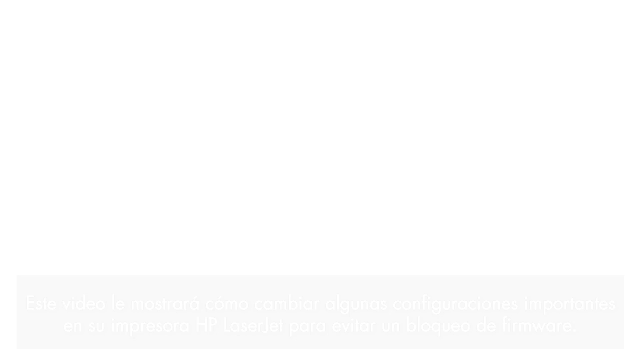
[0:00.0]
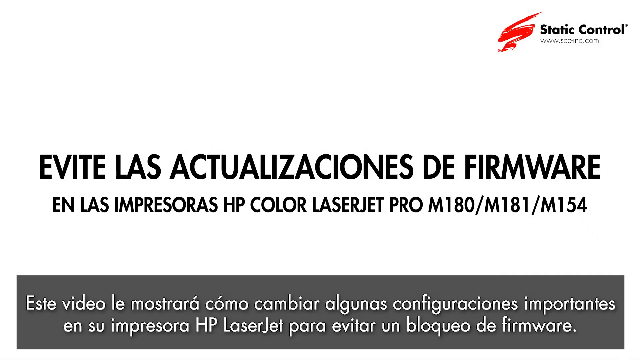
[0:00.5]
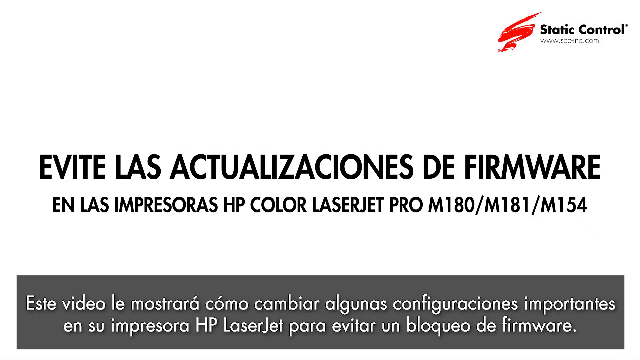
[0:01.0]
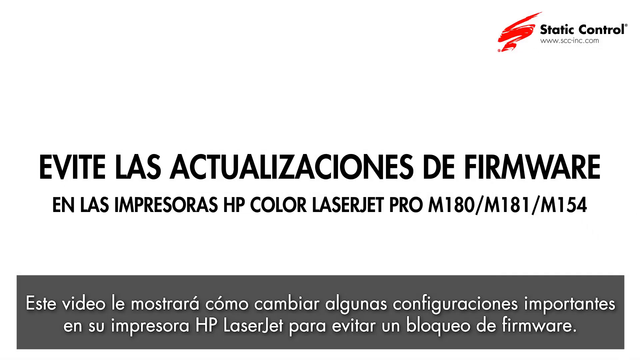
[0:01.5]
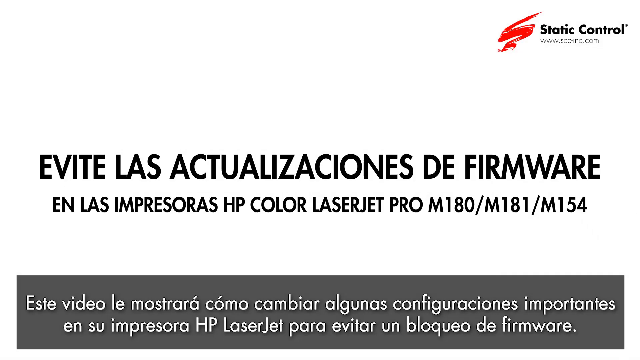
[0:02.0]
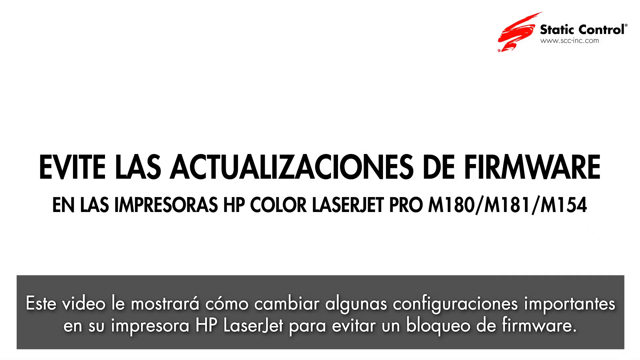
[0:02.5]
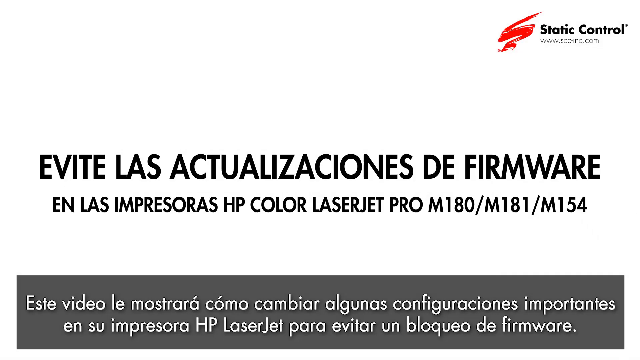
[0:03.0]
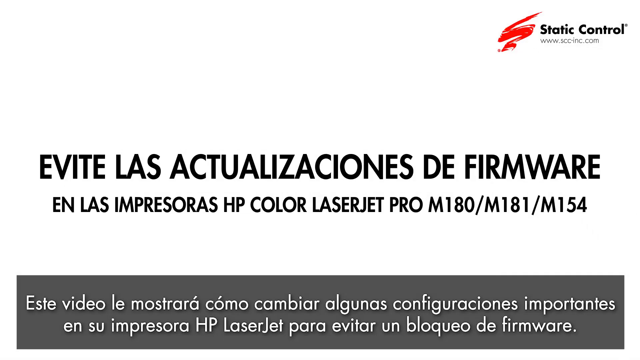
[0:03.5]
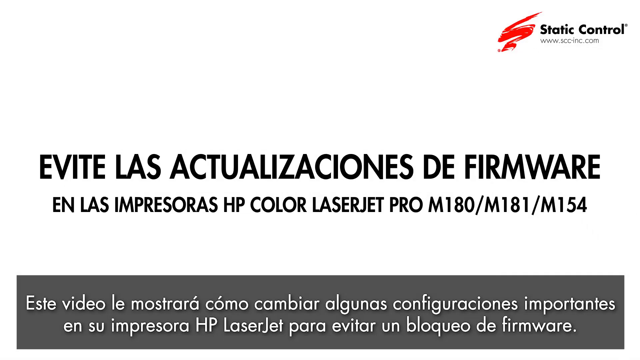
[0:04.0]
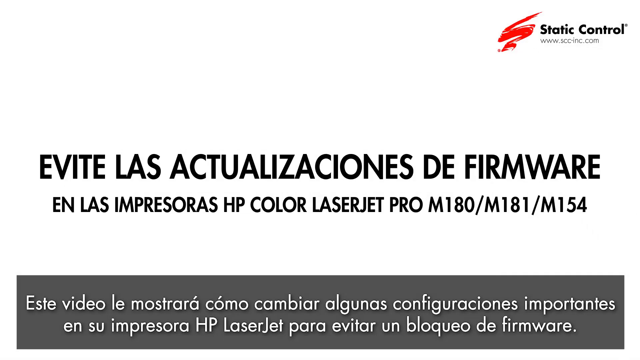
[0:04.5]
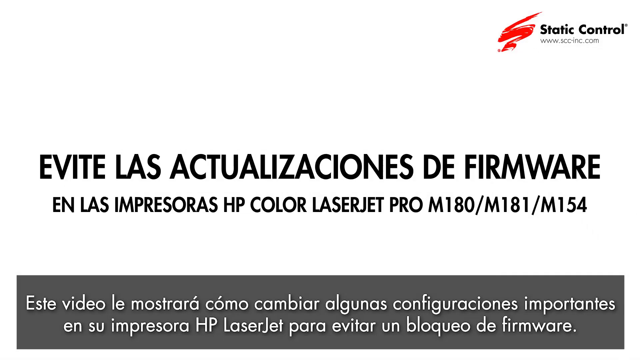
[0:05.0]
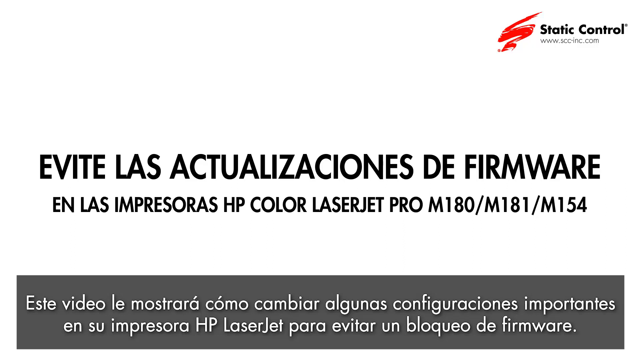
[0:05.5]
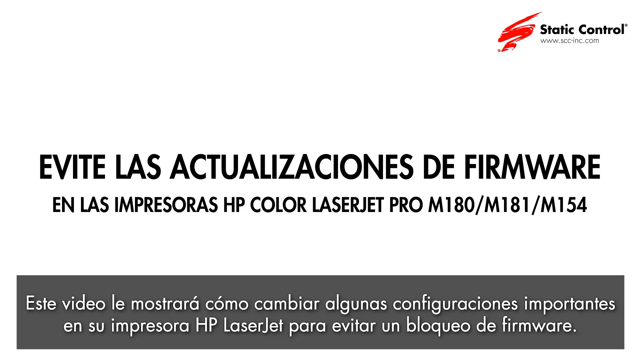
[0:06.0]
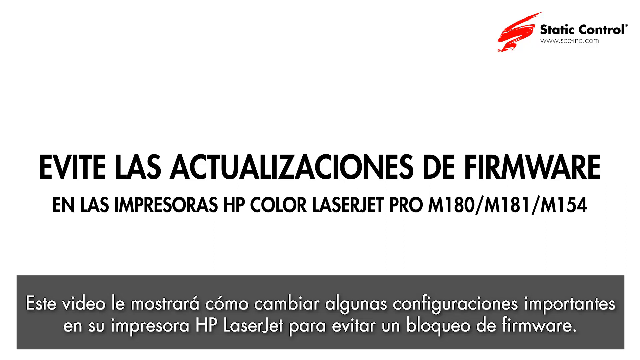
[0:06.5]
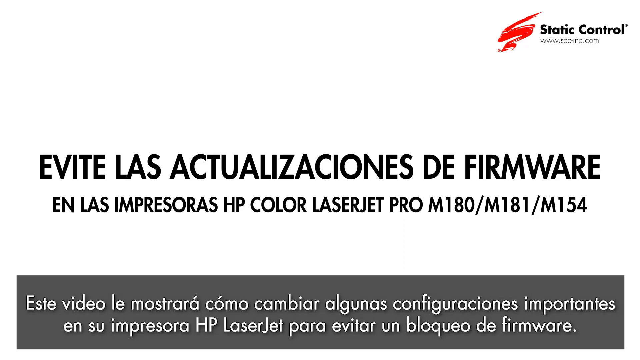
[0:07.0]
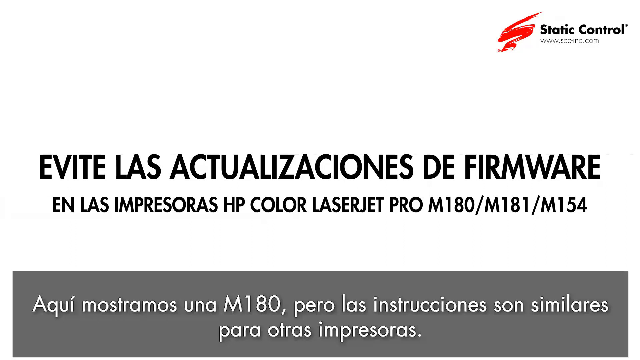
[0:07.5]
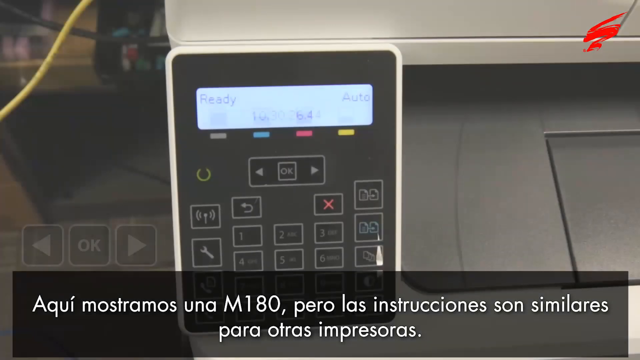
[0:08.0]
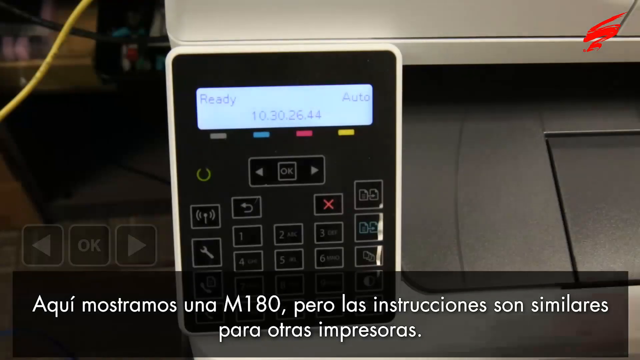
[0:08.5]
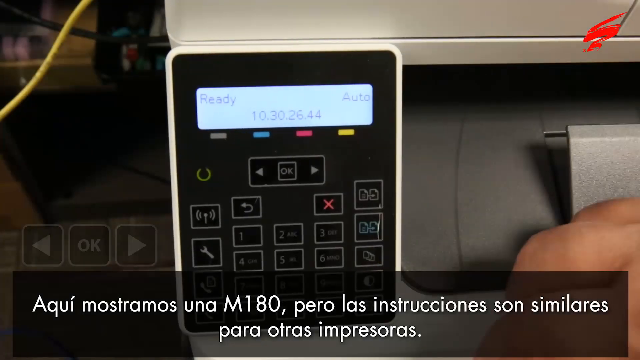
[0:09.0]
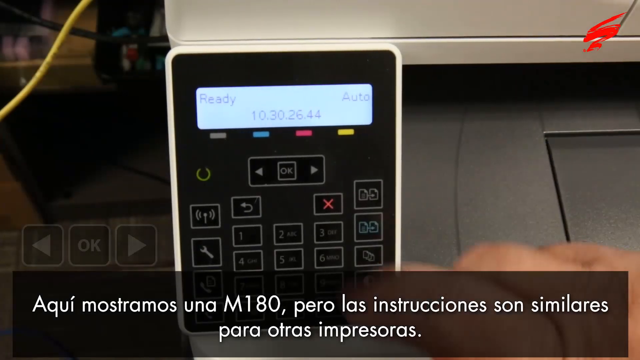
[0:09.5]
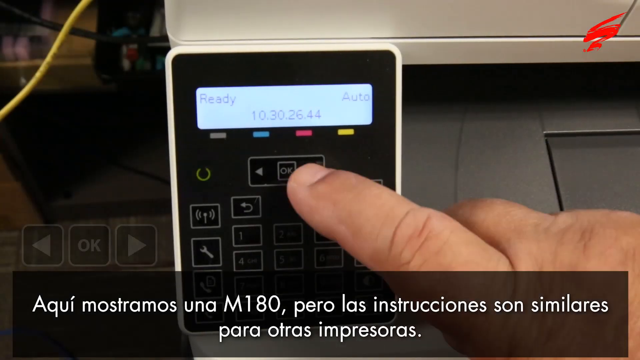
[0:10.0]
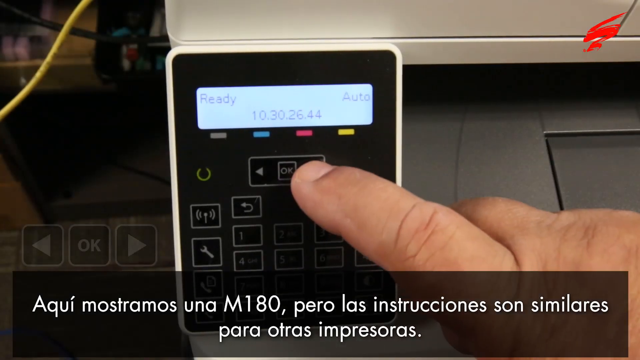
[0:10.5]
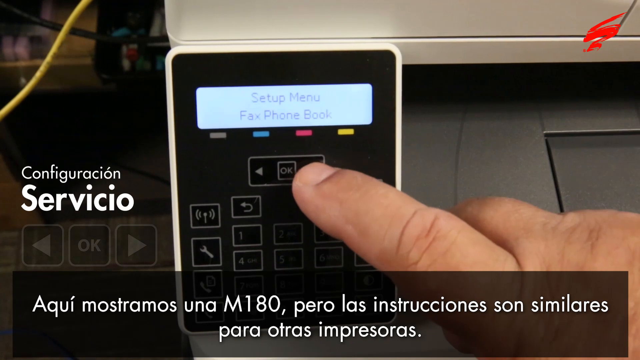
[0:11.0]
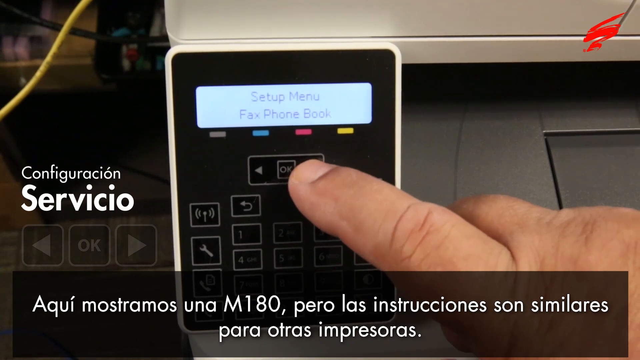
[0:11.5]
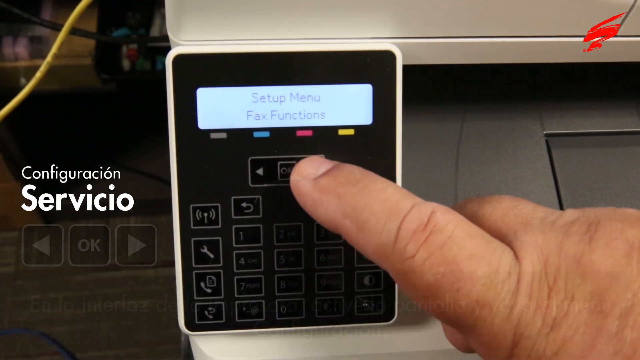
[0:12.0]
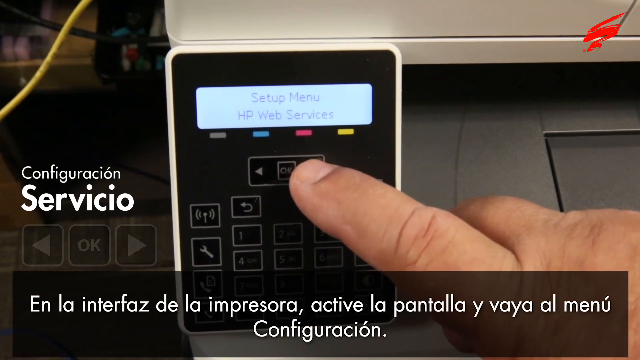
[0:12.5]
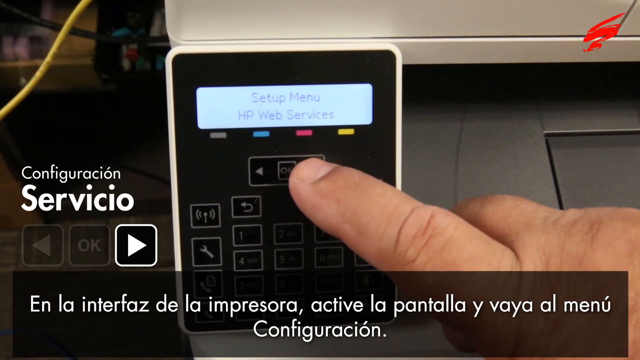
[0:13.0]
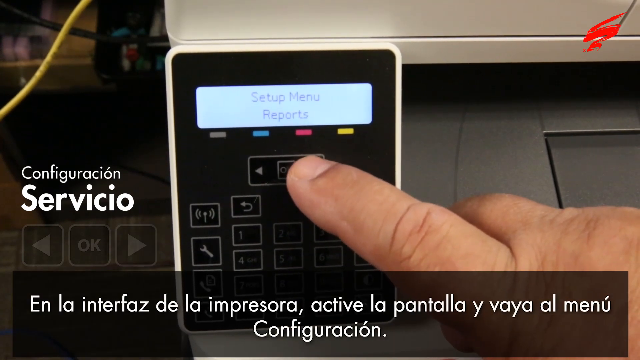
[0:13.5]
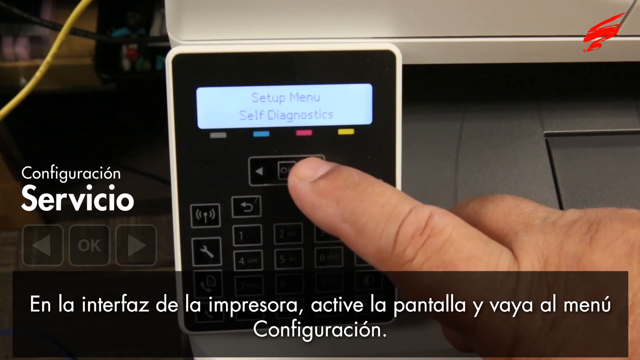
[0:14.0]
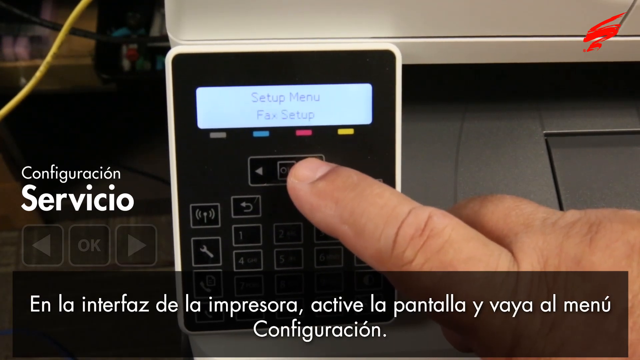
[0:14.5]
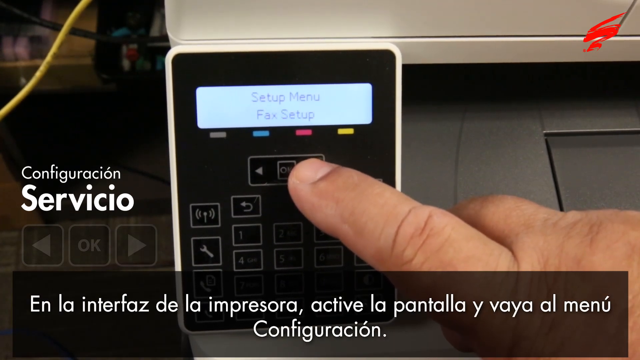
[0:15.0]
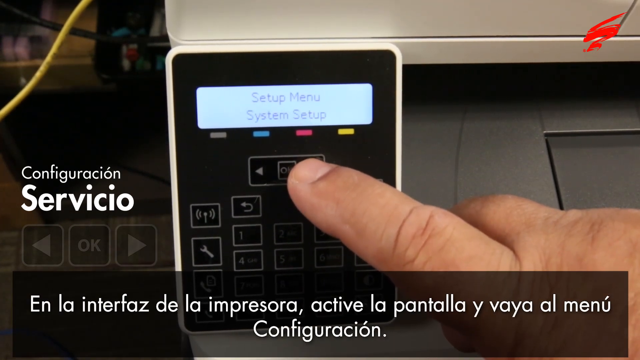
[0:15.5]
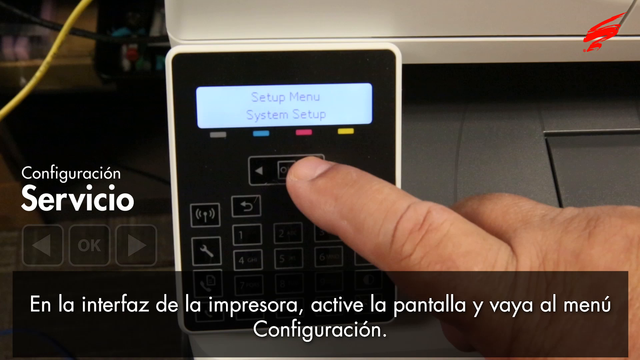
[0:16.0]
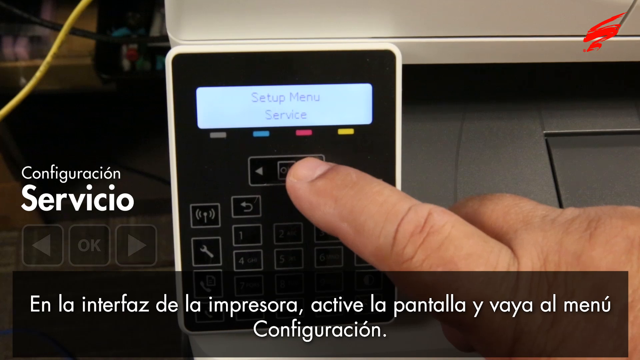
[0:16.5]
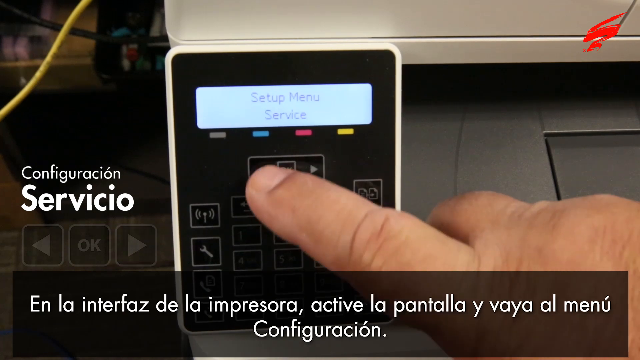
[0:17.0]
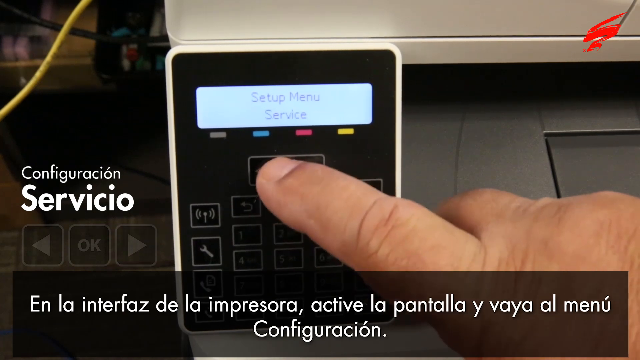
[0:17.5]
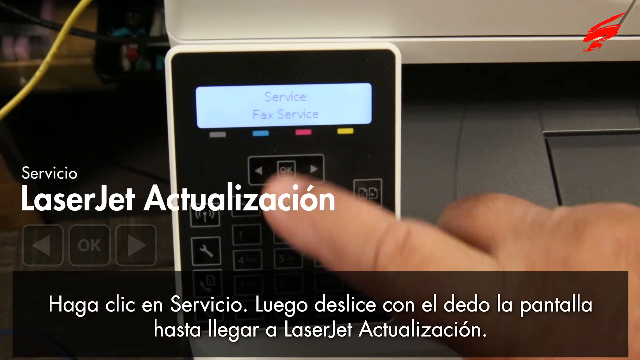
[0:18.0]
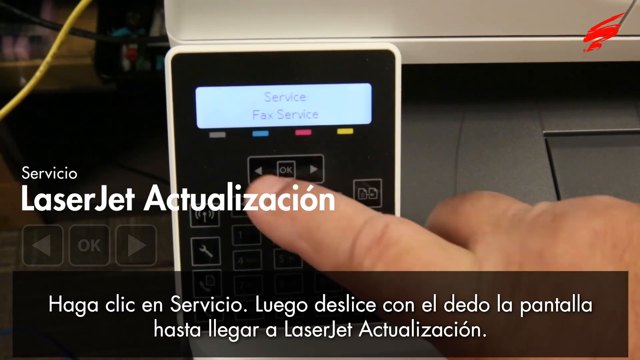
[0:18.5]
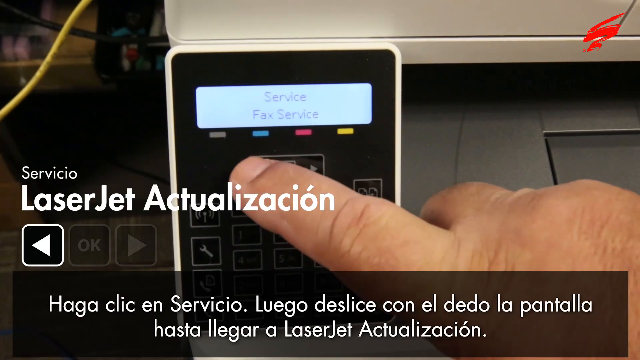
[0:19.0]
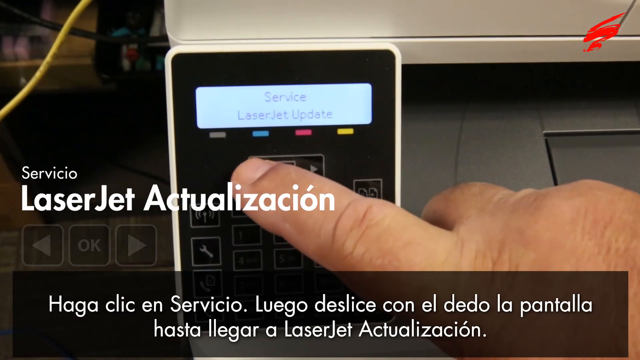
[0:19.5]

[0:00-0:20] An intro sequence opens the video. A logo at the top right reads "Static Control" along with "www.sccinc.com". In the middle the text reads "Evite Las Actualizaciones de Firmware", and right below that it reads "En Las Impresoras HP Color LaserJet Pro M180-M181-M154". At the bottom it reads "Este Video Le Mostara", followed by more Spanish text. Footage follows of someone typing on a device that is not a calculator but apparently some sort of service machine that can be programmed. The person seems to be taking the viewer through the process of programming it, going through its settings, so it is probably a tutorial.